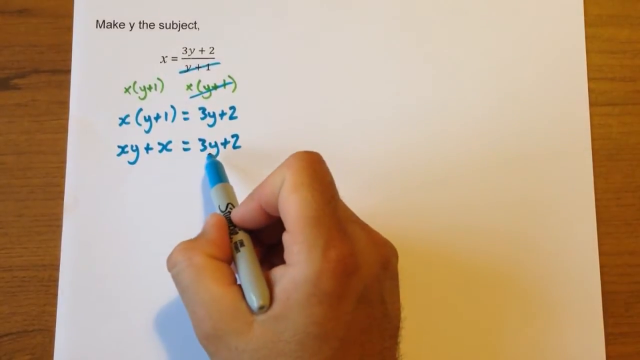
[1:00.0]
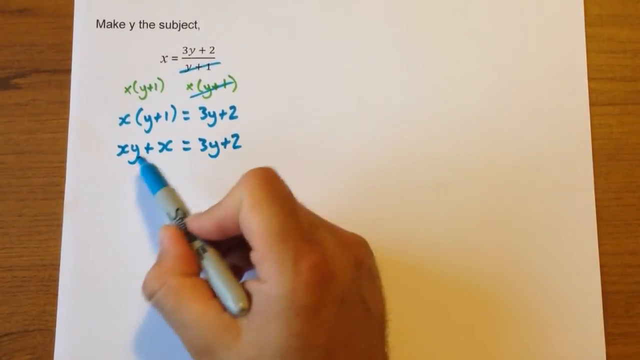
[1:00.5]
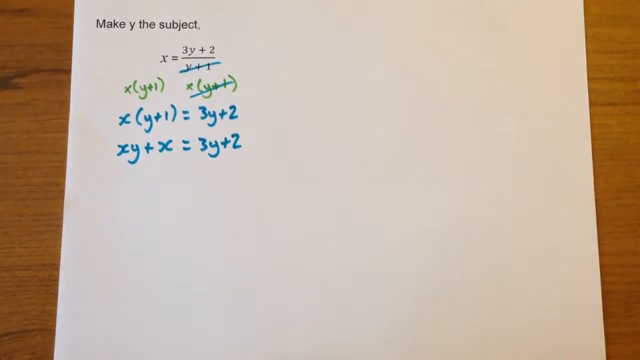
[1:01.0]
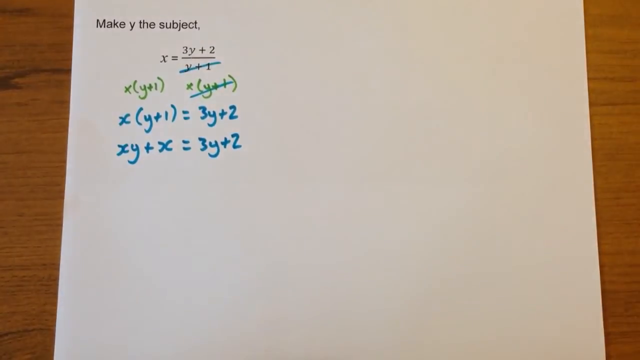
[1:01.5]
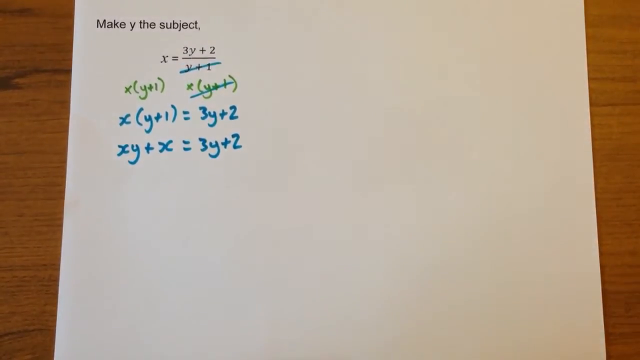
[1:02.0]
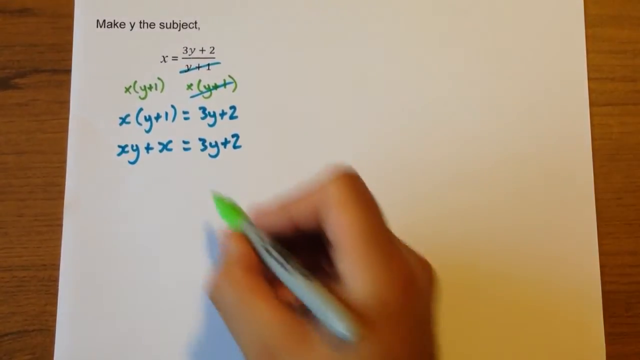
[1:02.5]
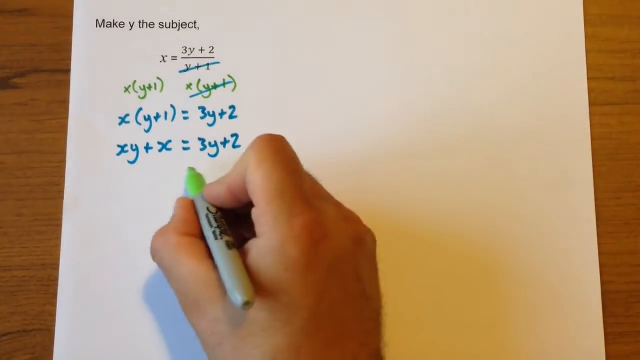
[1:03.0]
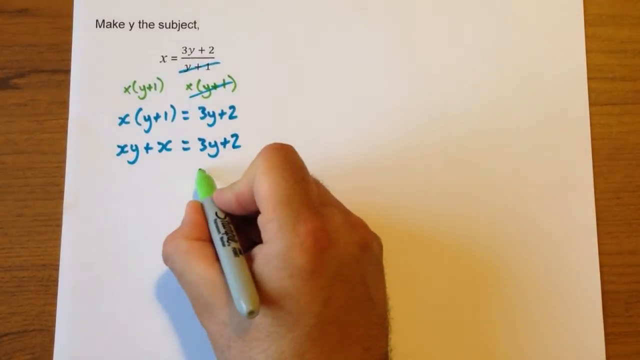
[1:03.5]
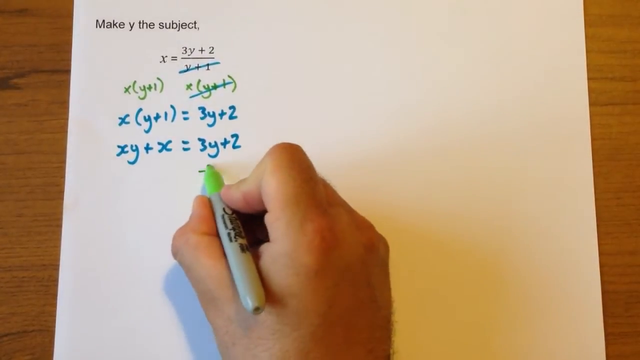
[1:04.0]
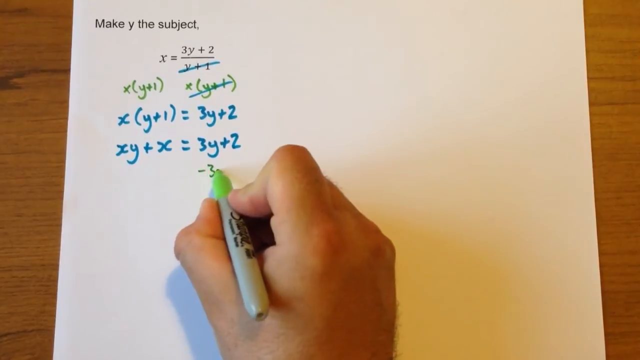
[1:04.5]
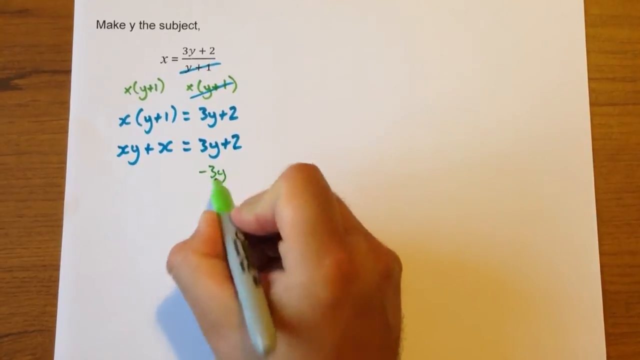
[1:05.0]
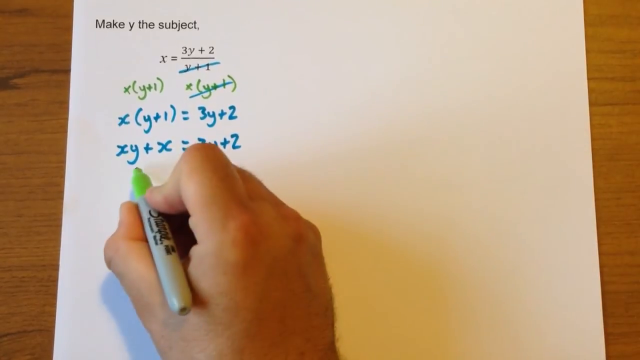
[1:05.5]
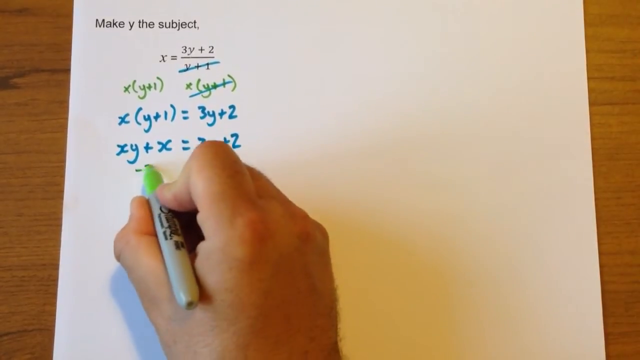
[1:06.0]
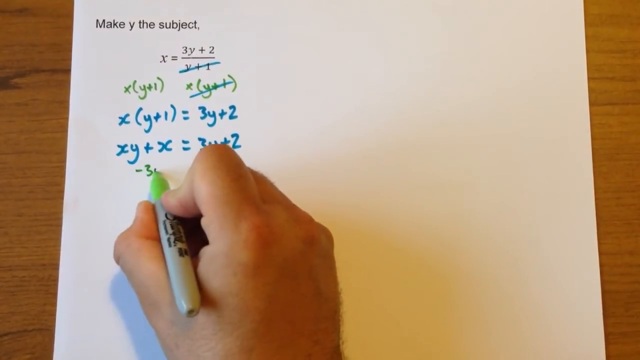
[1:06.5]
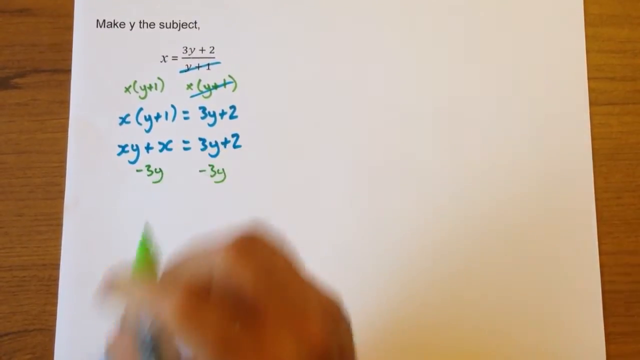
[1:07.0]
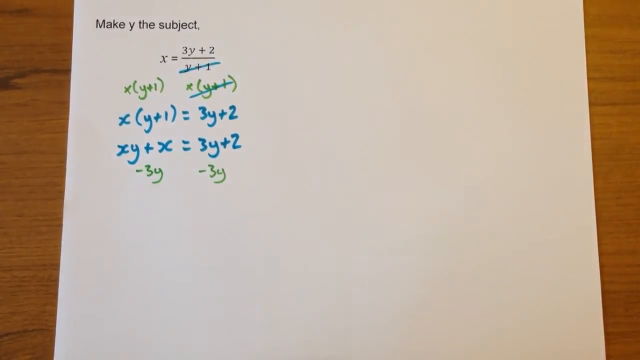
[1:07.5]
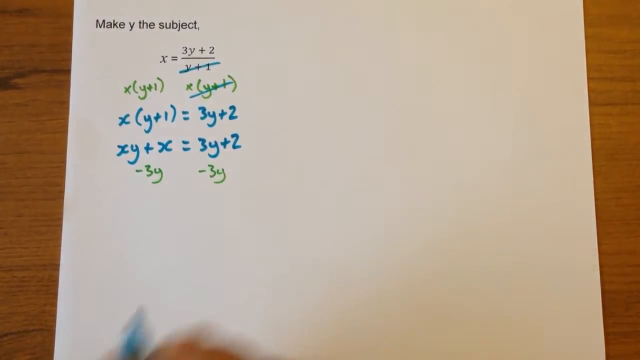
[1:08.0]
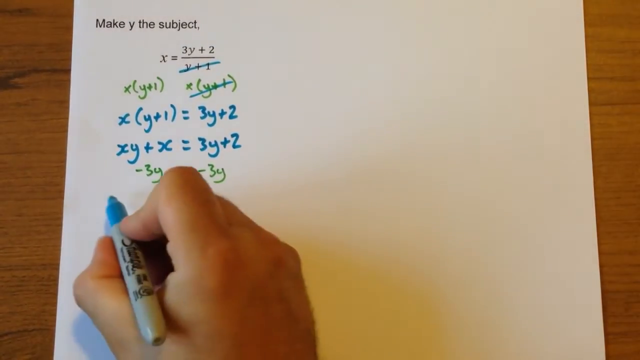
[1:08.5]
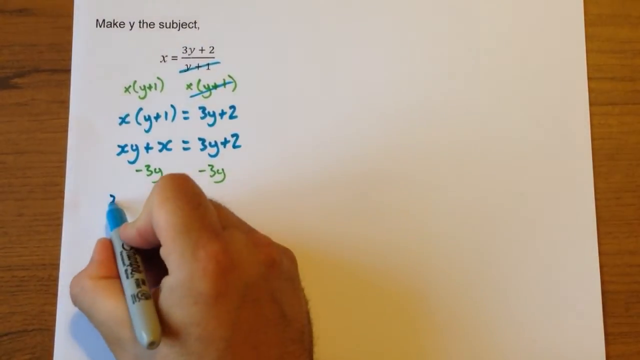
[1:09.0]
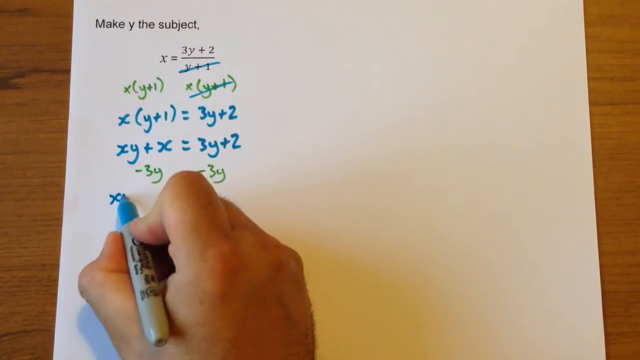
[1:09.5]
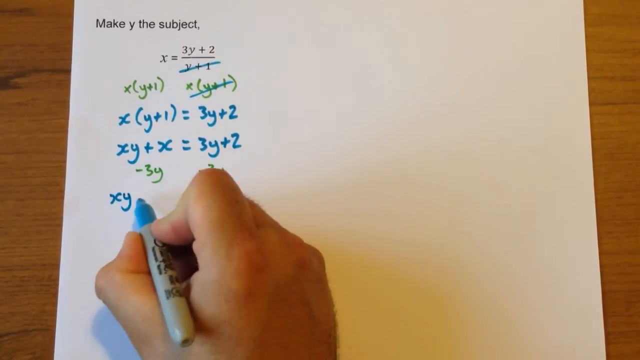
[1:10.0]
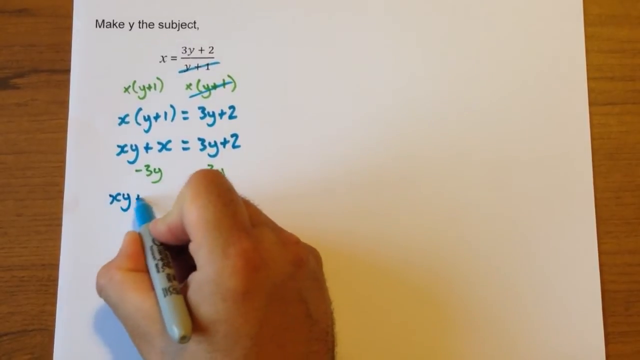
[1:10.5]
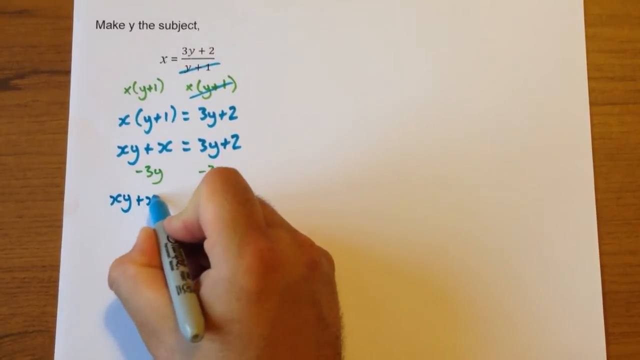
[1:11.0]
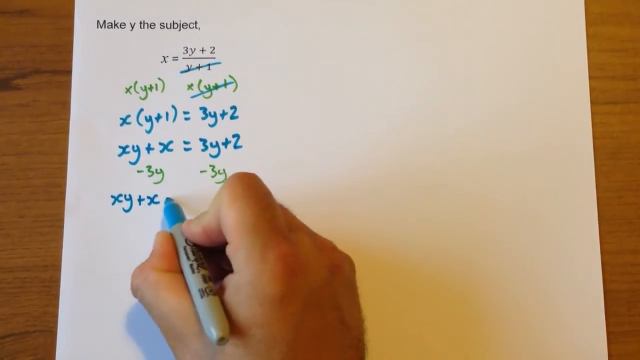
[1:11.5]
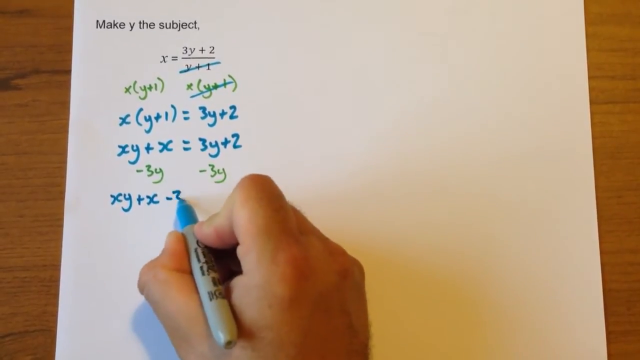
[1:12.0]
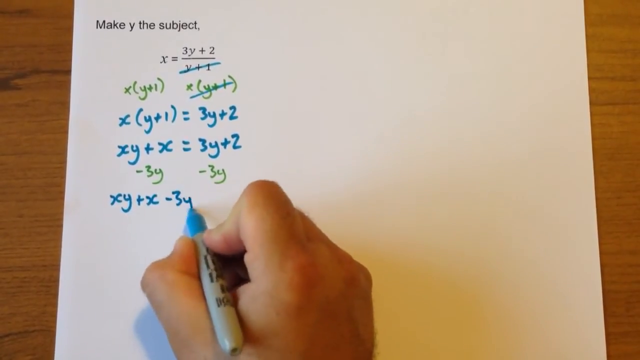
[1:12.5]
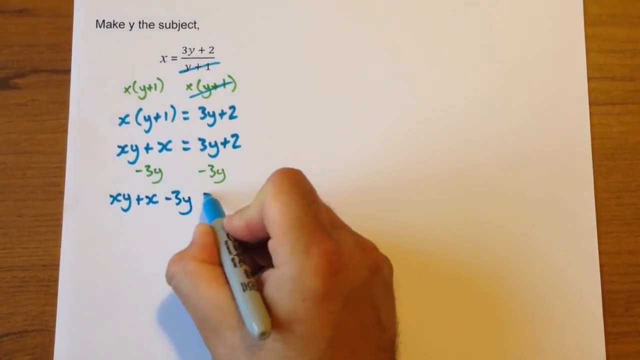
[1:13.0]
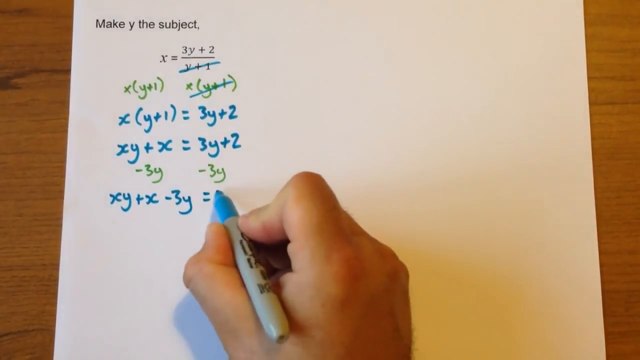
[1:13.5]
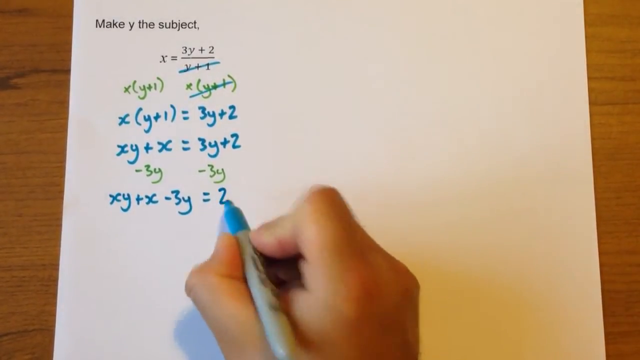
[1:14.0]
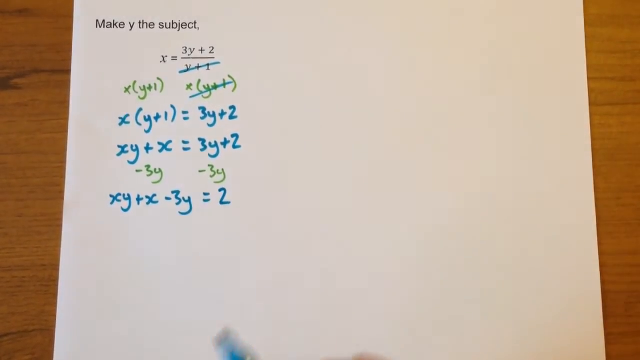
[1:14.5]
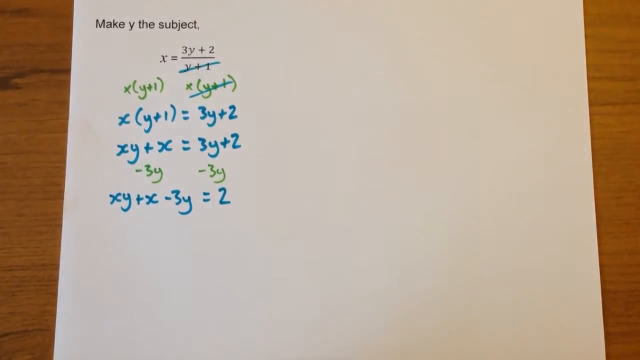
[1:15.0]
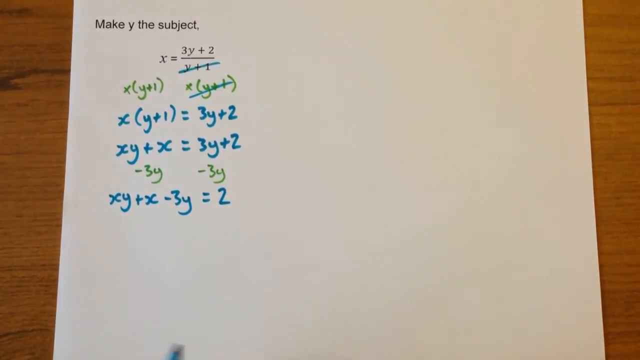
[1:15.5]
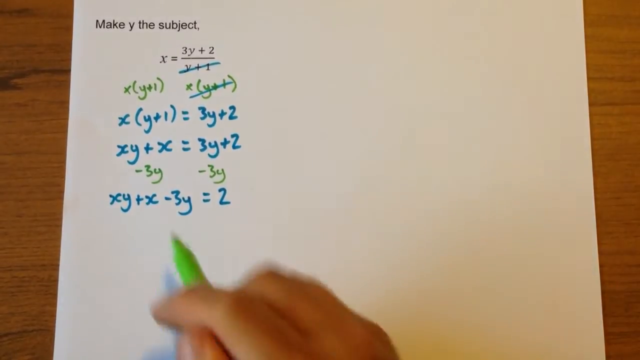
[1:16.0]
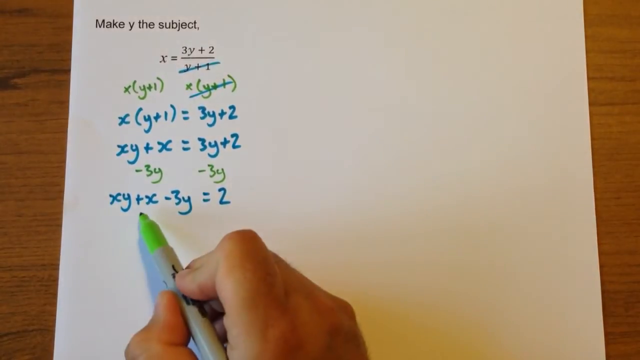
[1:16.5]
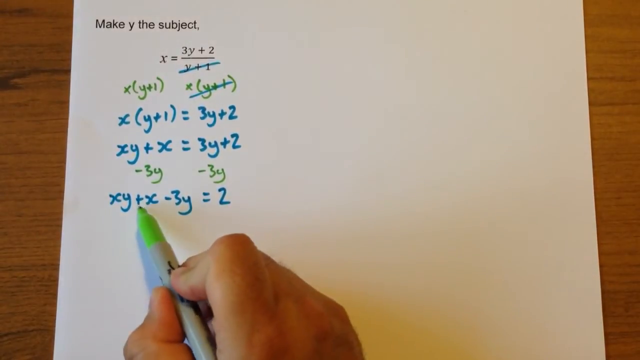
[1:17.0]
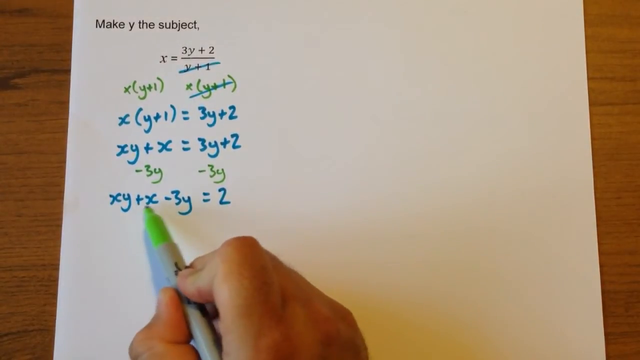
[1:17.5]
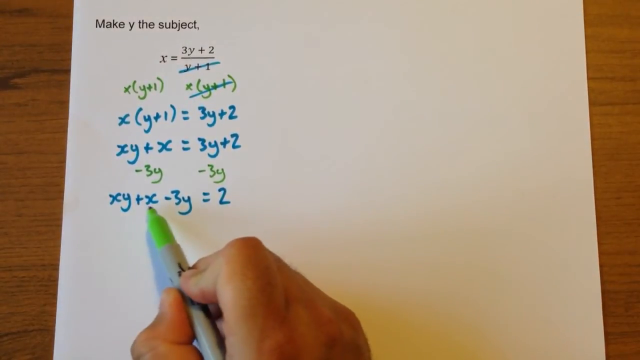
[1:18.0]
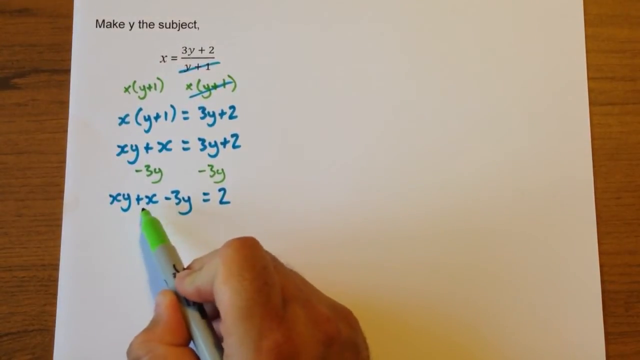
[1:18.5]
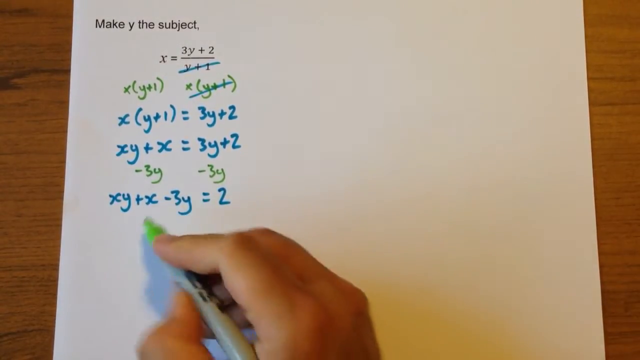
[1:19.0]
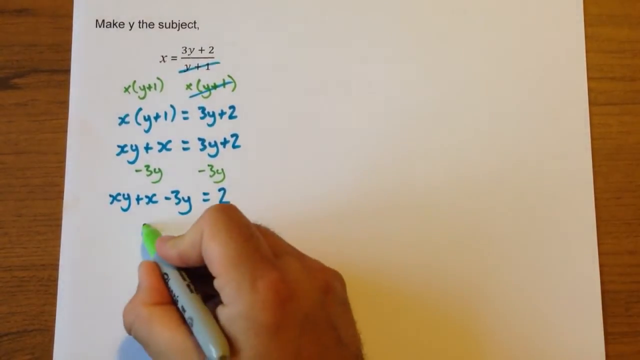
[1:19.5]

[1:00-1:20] The equation is being solved on a white piece of paper on a brown table. A Caucasian right hand is visible. In the upper left of the paper is "make y the subject," and the equation is x = (3y + 2)/(y + 1). The person has used a blue and a green Sharpie and is now using the blue Sharpie. The paper shows x(y + 1) = 3y + 2, and underneath that, xy + x = 3y + 2, written in blue ink.